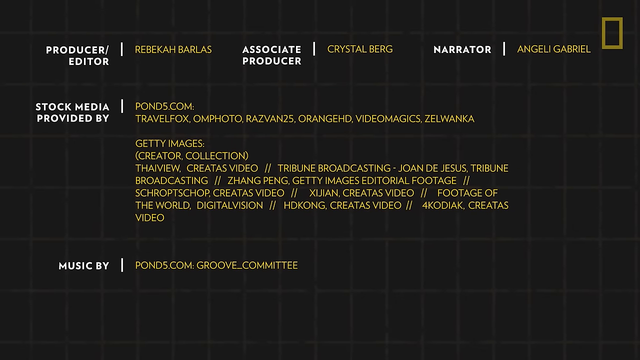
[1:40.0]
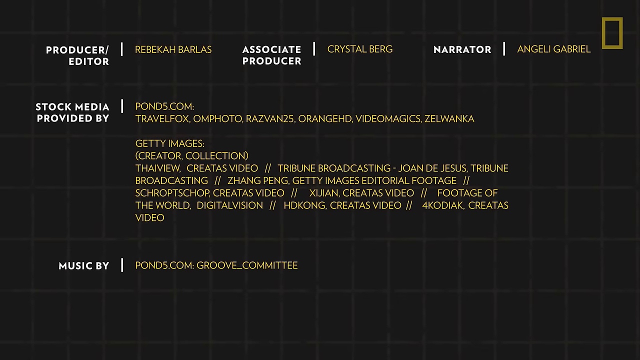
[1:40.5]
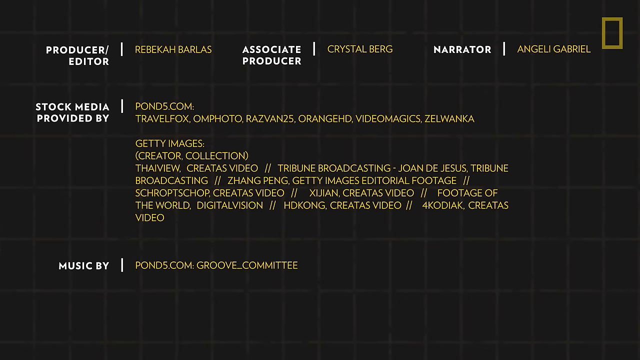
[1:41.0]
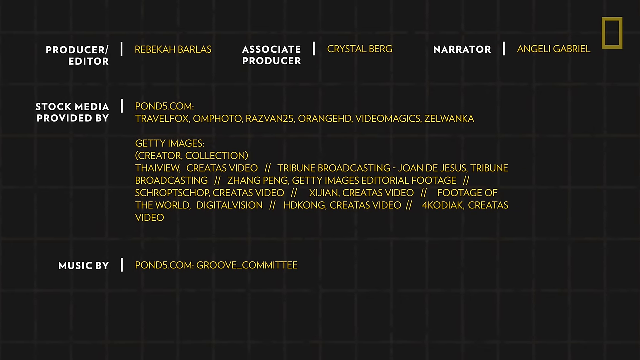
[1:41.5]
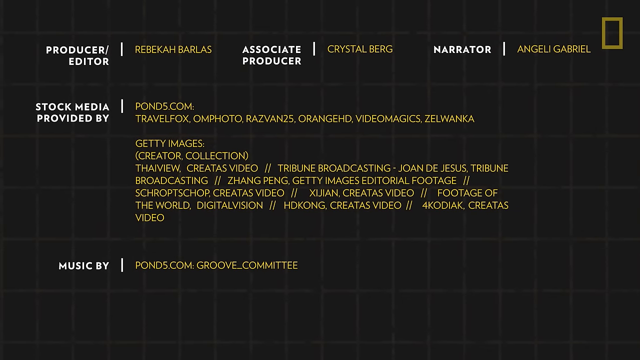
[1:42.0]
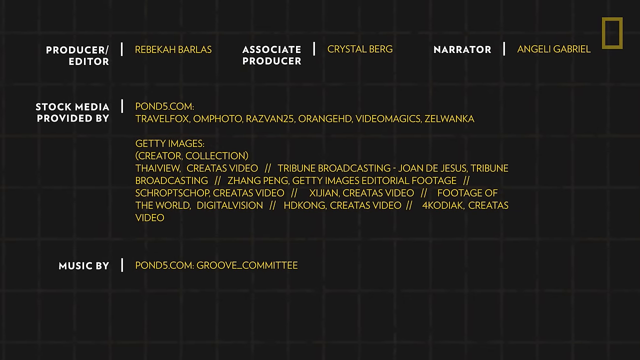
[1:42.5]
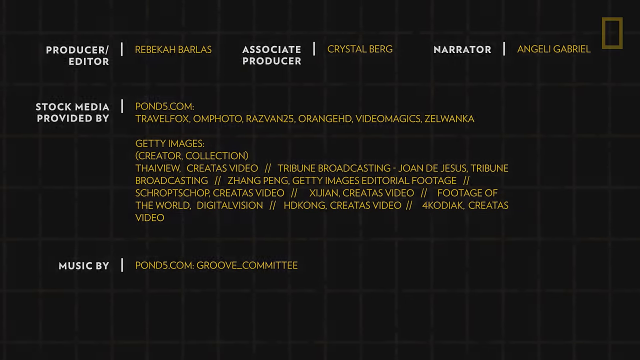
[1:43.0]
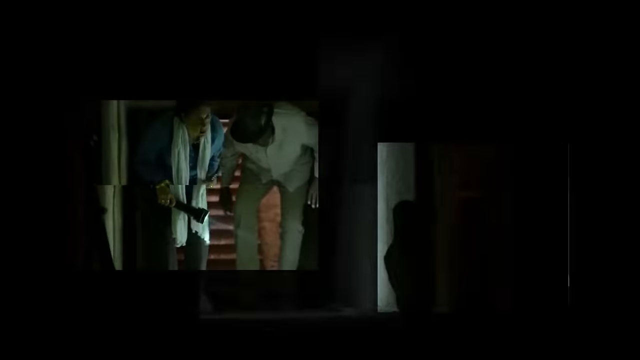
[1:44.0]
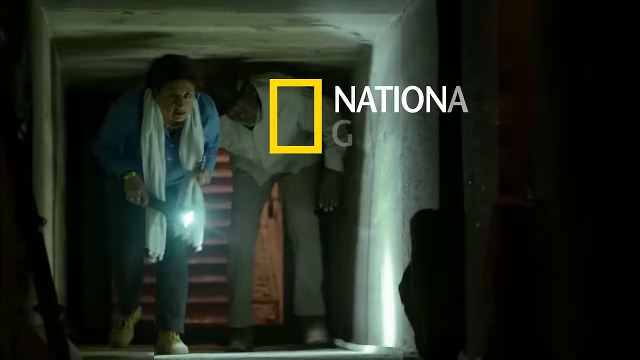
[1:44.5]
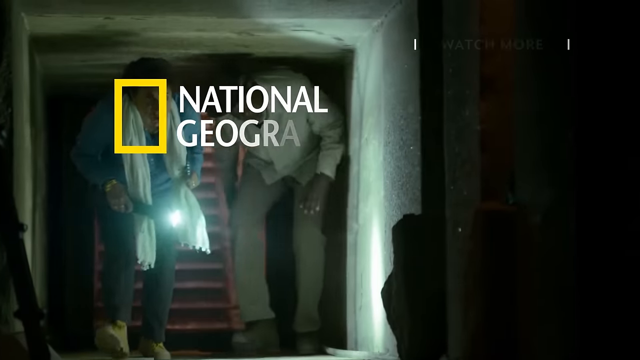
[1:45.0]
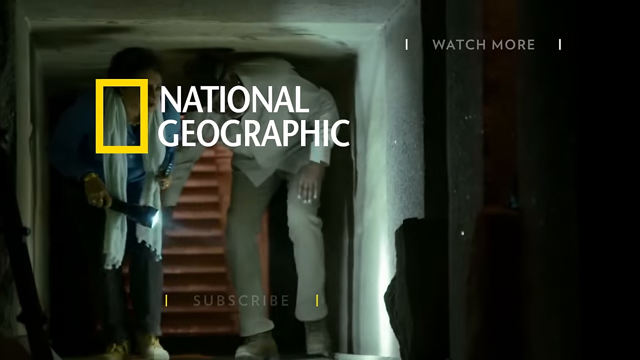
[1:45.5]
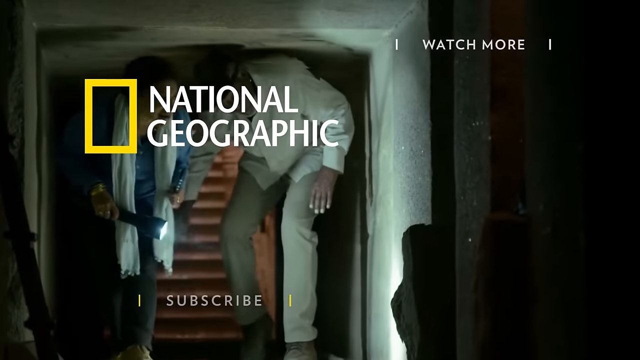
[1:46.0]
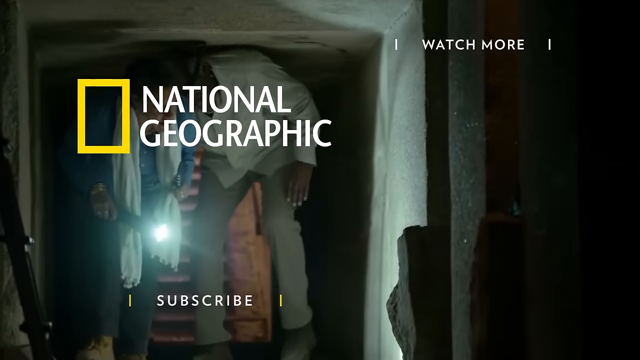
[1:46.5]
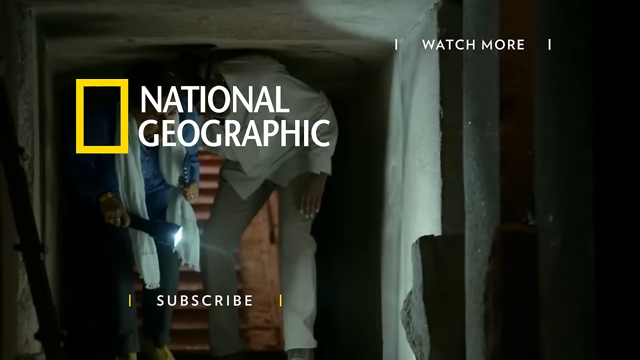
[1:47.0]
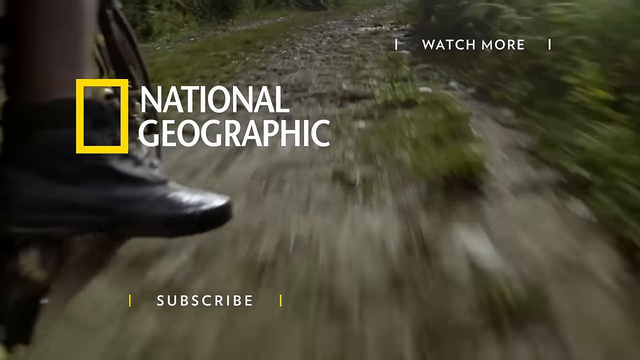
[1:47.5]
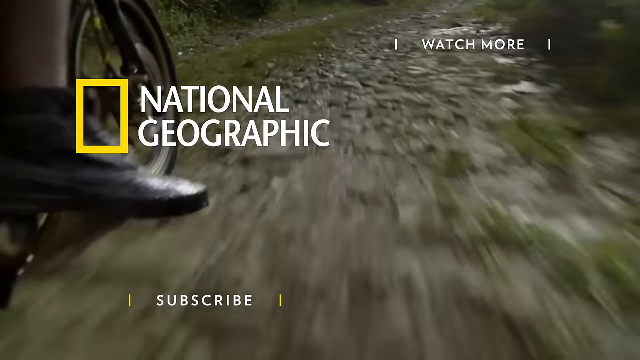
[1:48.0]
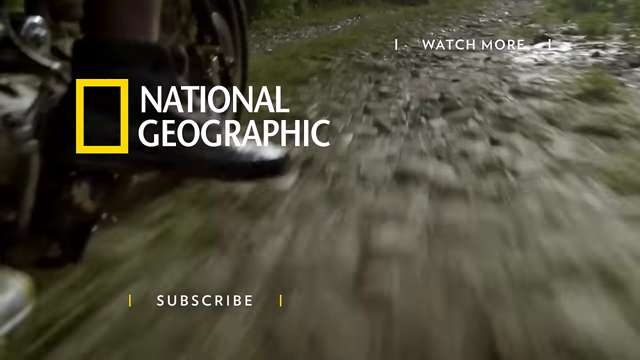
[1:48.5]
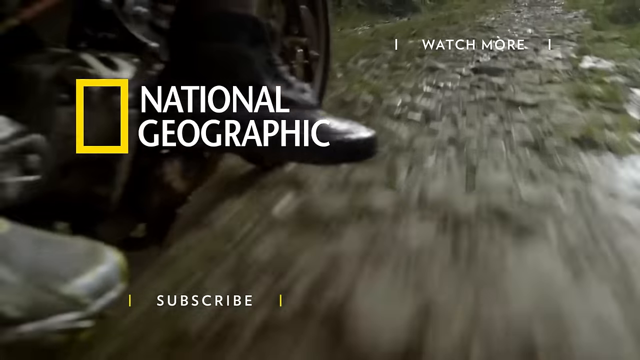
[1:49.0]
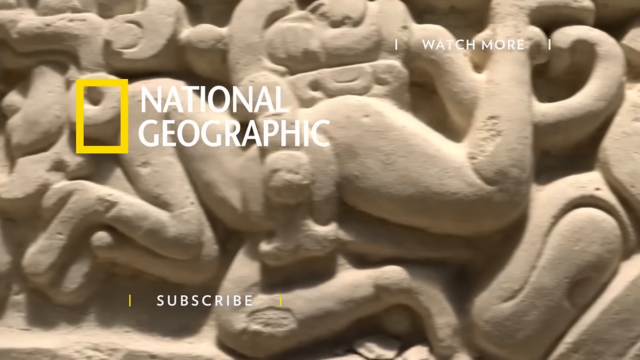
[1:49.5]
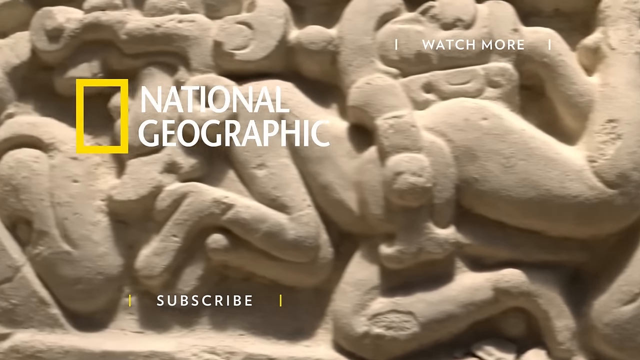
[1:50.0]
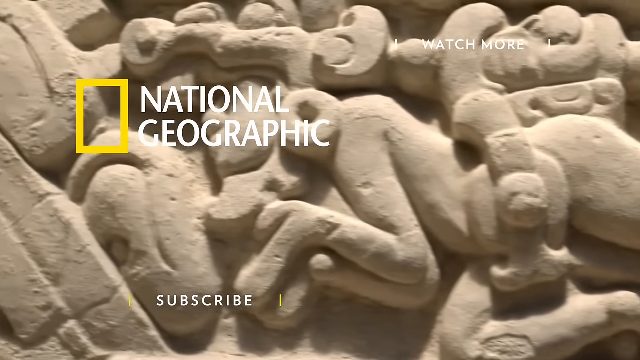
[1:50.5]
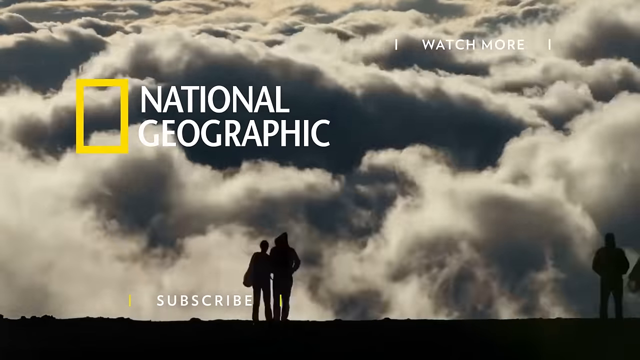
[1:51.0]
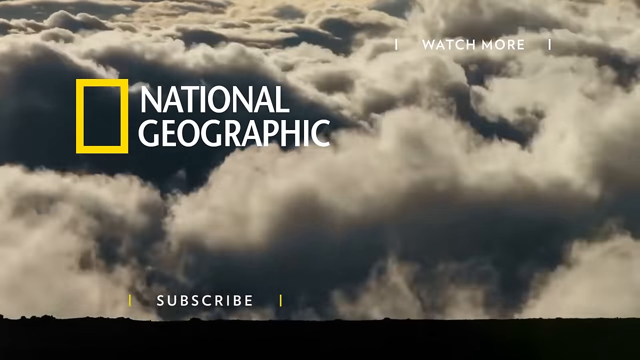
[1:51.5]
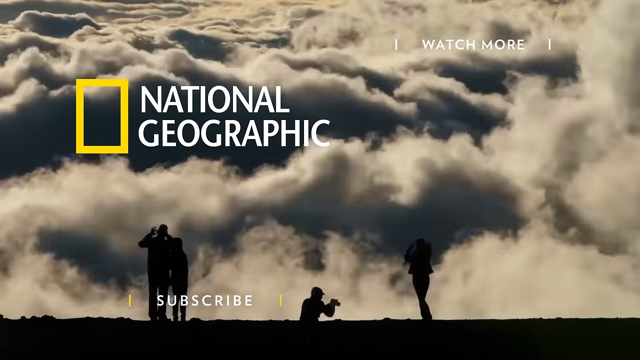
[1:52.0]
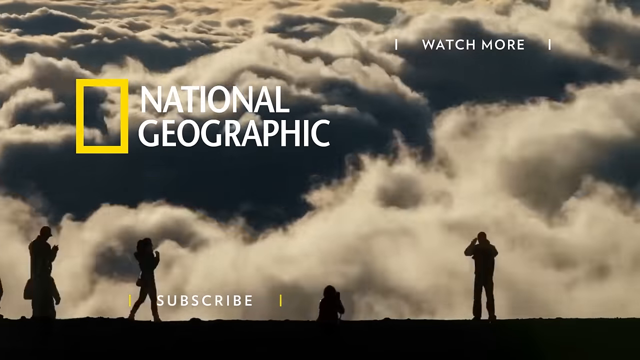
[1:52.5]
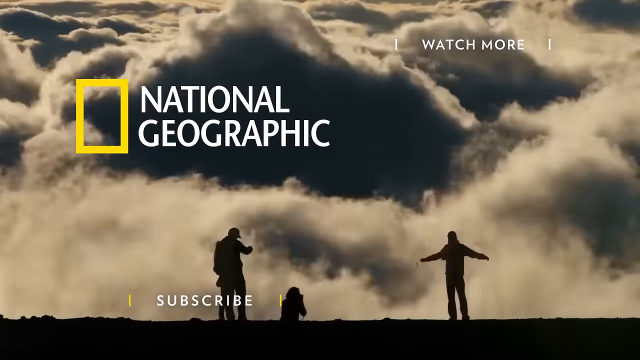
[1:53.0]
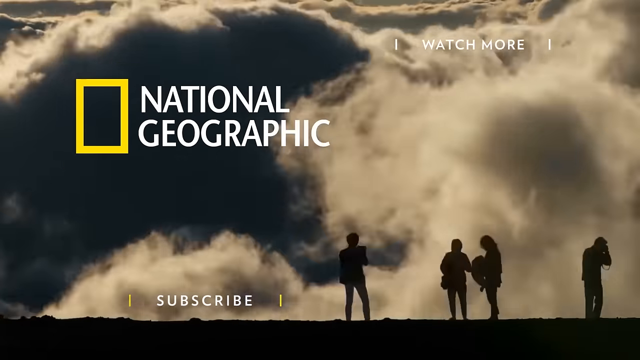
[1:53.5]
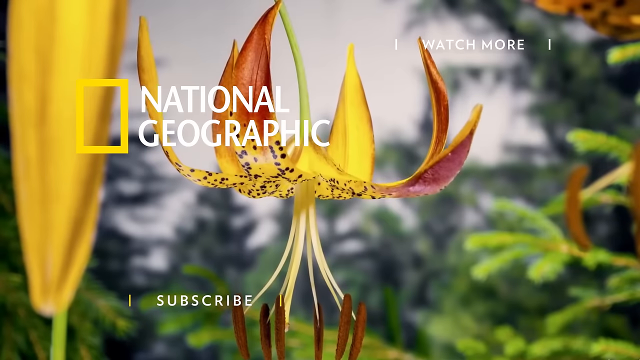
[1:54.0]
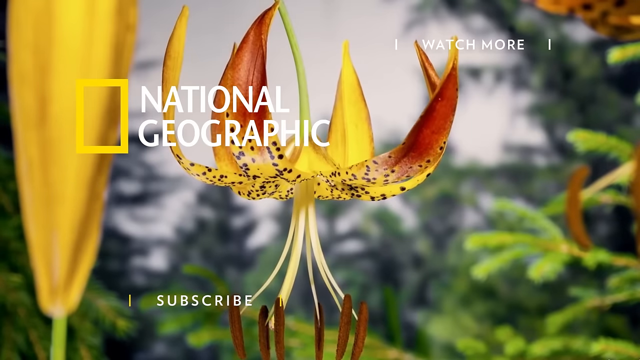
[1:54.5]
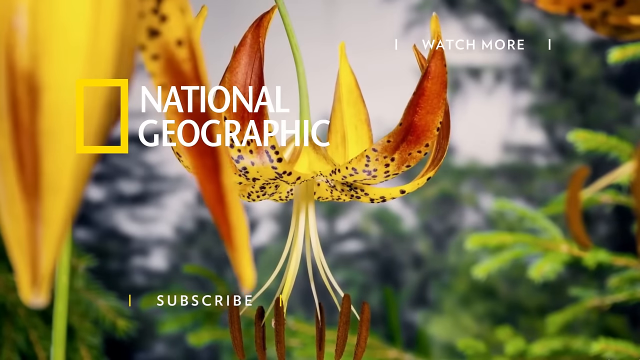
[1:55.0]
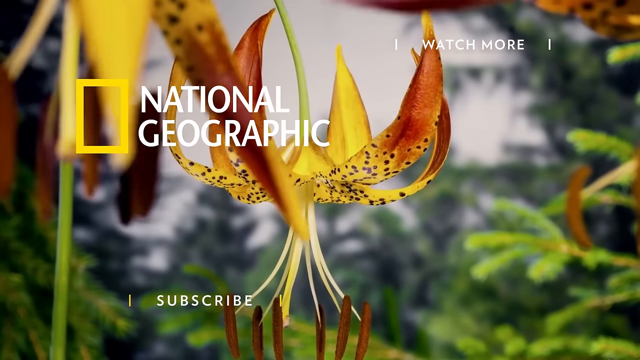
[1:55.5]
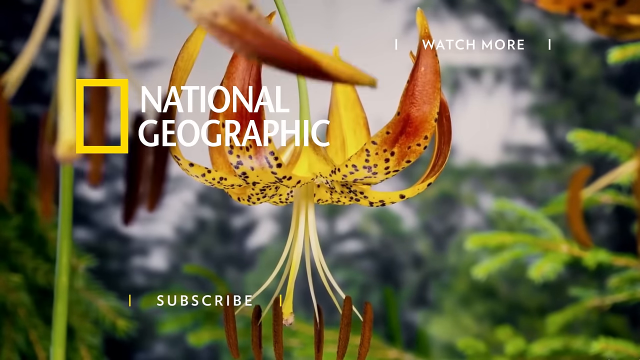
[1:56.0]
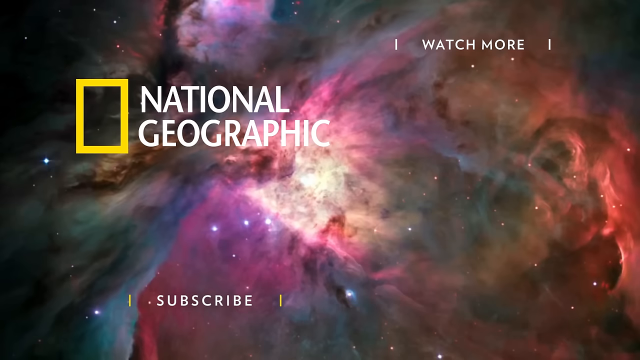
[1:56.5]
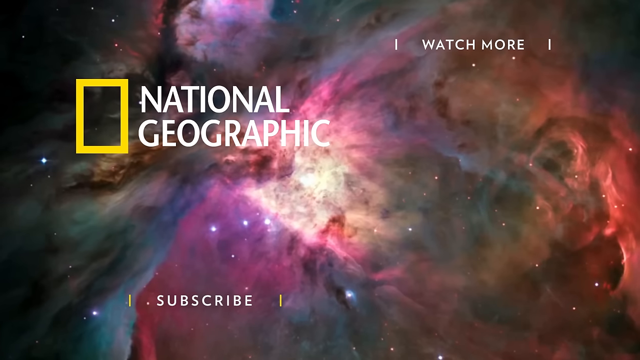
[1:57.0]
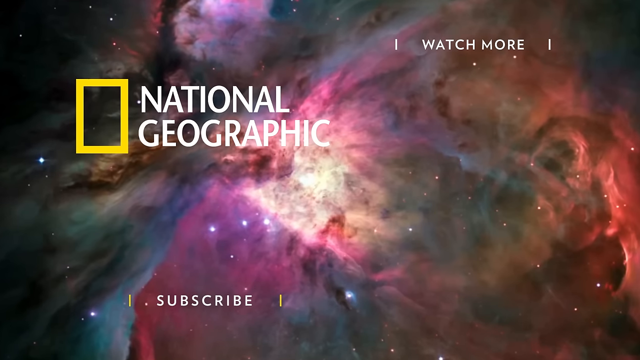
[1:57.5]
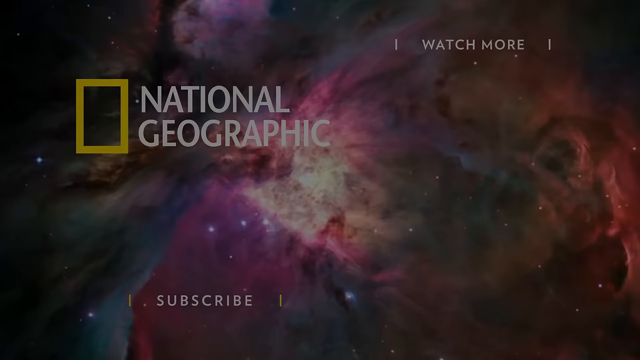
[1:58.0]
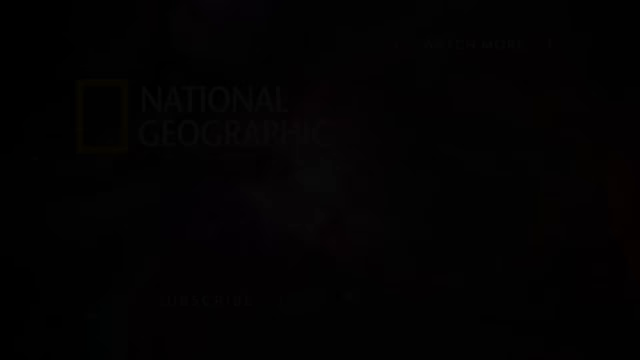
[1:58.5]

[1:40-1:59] The video winds up with stock media that seems to come from National Geographic. All of the footage is stock footage.